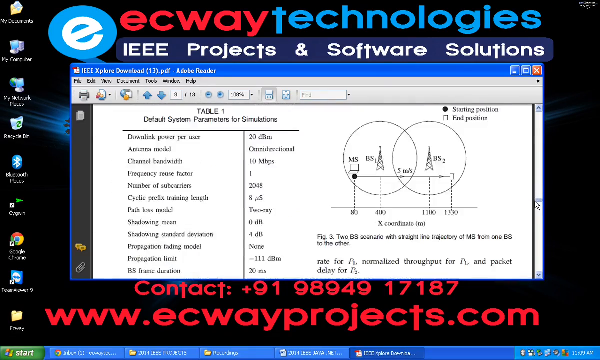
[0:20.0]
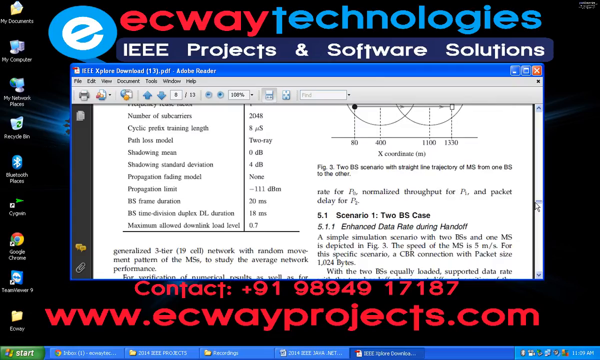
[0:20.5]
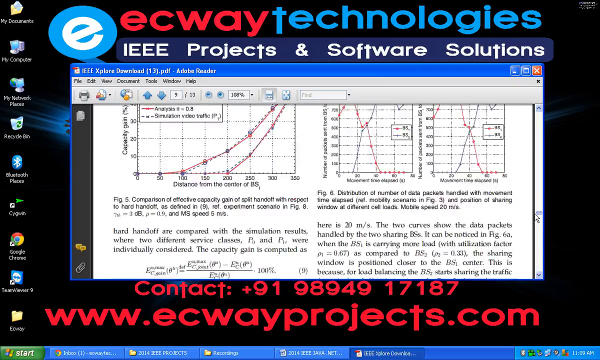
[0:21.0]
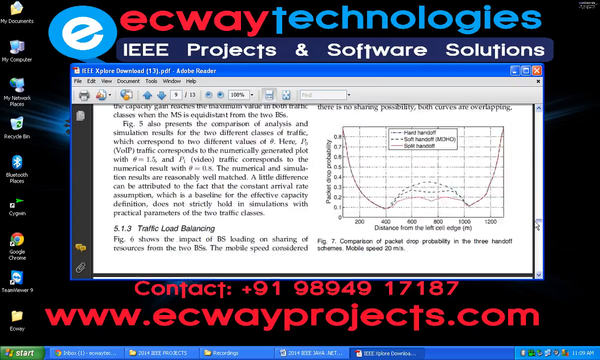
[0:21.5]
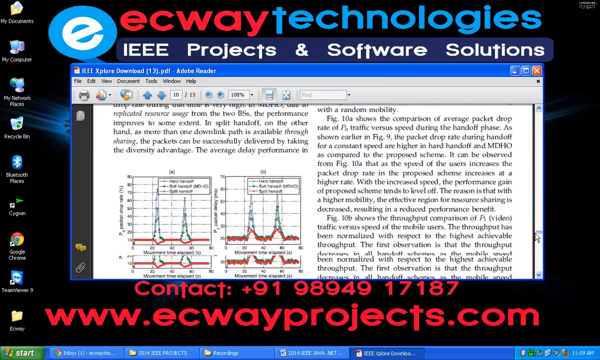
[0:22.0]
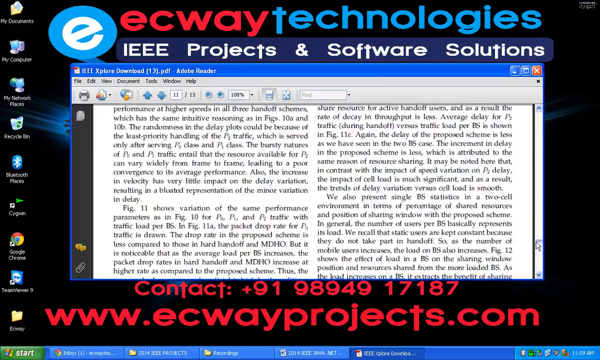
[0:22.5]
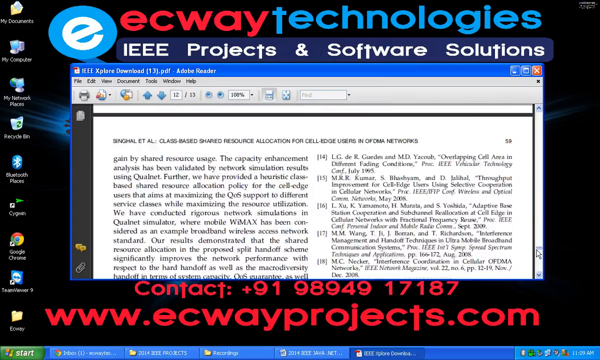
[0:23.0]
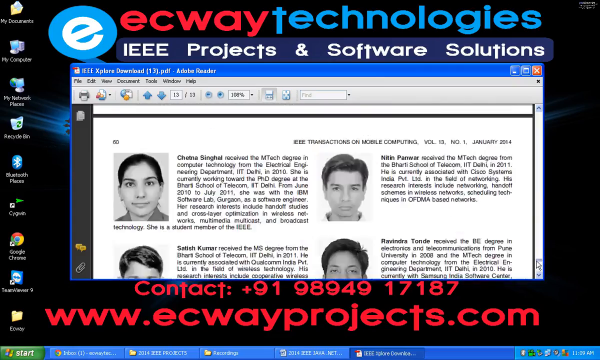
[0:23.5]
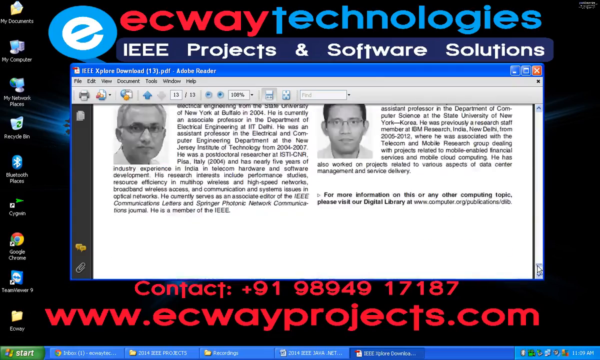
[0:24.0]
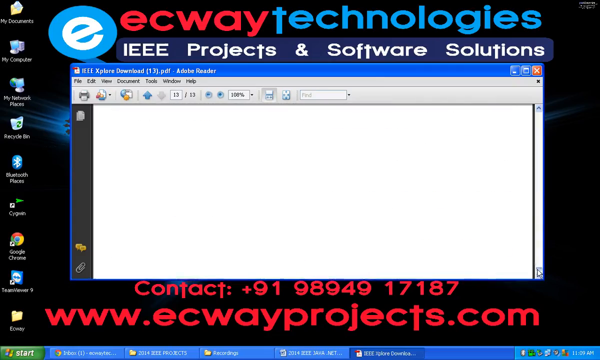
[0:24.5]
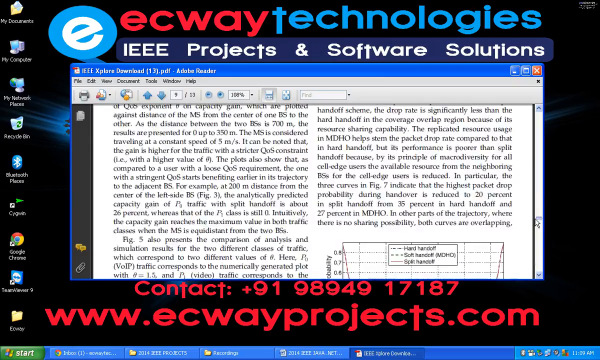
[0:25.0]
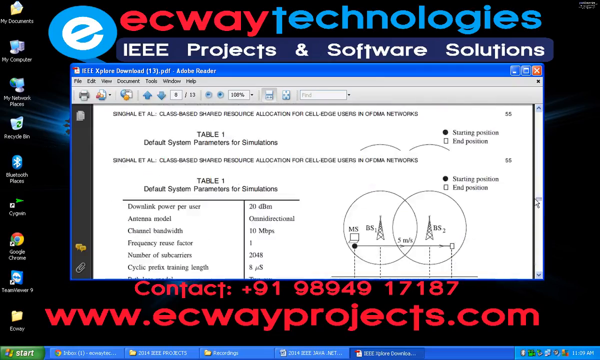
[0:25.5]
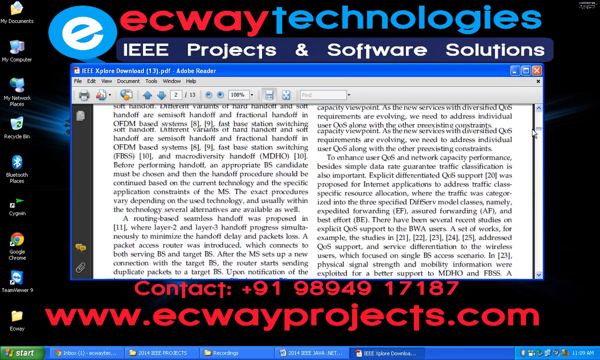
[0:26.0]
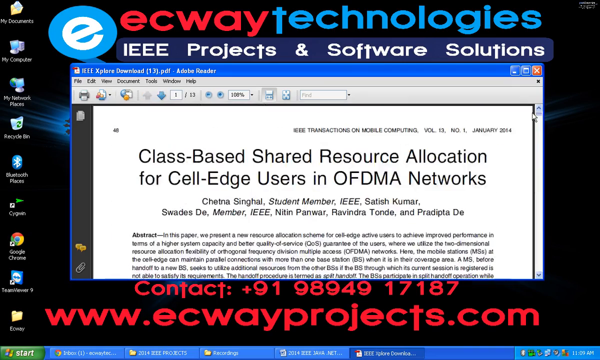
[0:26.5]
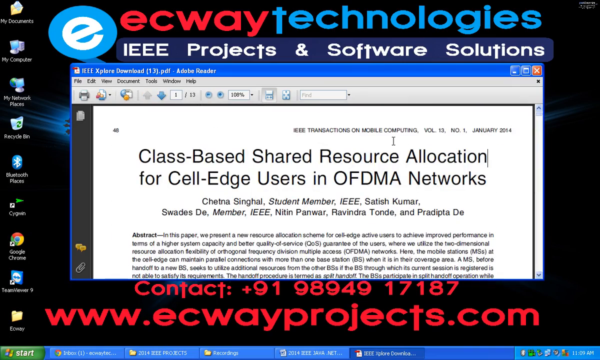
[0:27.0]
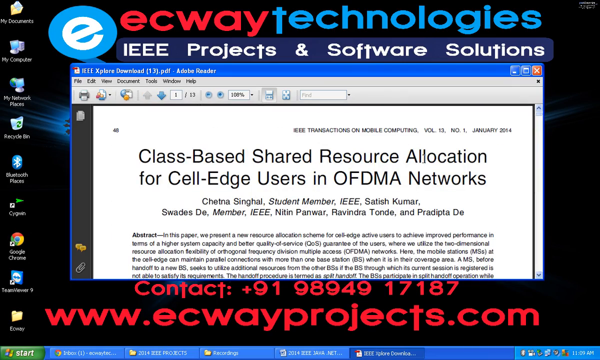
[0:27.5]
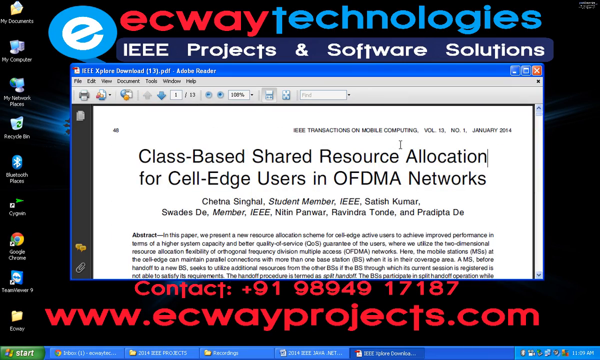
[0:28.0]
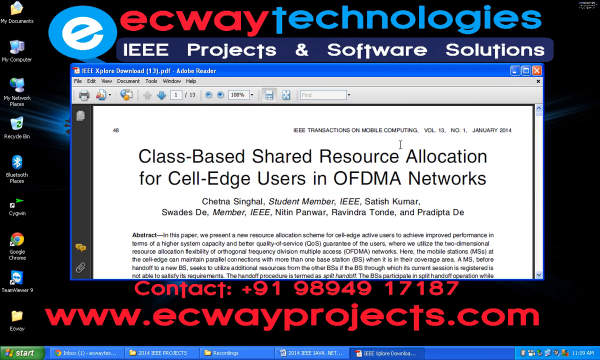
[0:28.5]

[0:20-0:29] A technological white paper or report on a computer screen is scrolled along until it reaches the bottom. It is all black writing on white, with formulas, data and calculations. At the top of the report's window is the company name, ECWay Technologies, with the text "IEEE Projects and Software Solutions", and at the bottom are a contact number and the website URL, "ecwayprojects.com". It seems to be a highlight of some of the services the company offers, shown through a kind of white paper.